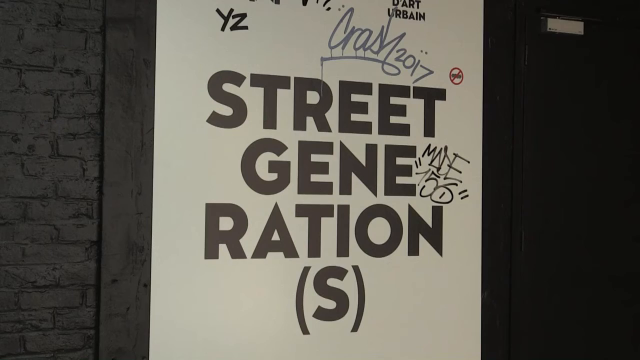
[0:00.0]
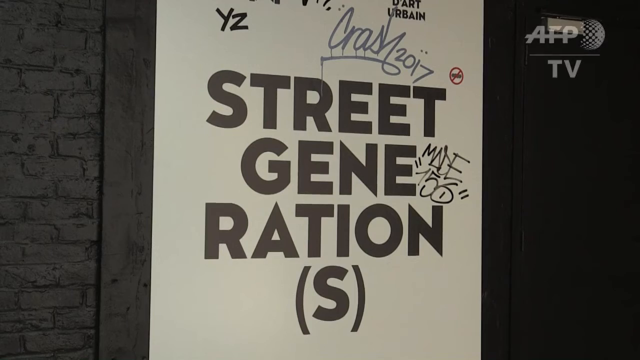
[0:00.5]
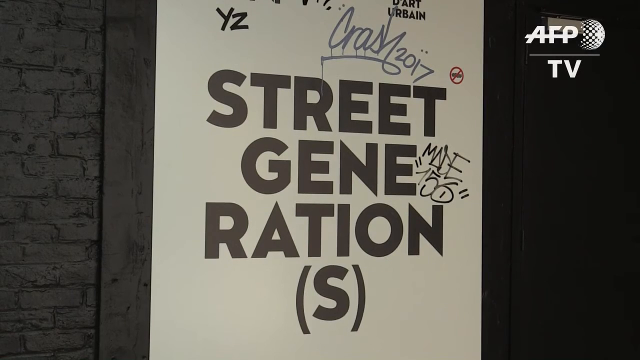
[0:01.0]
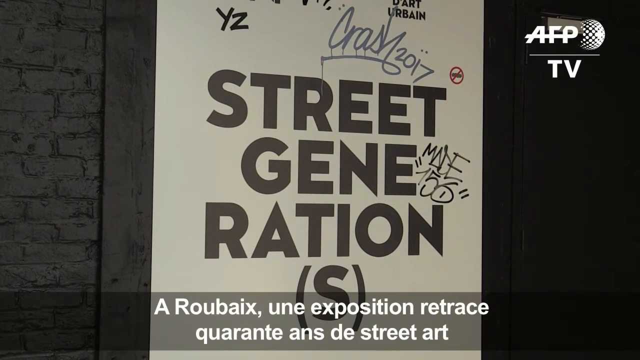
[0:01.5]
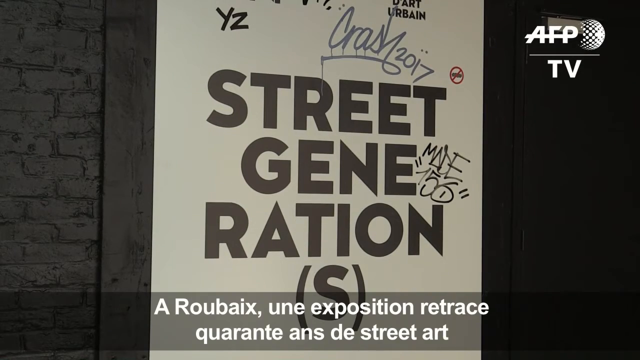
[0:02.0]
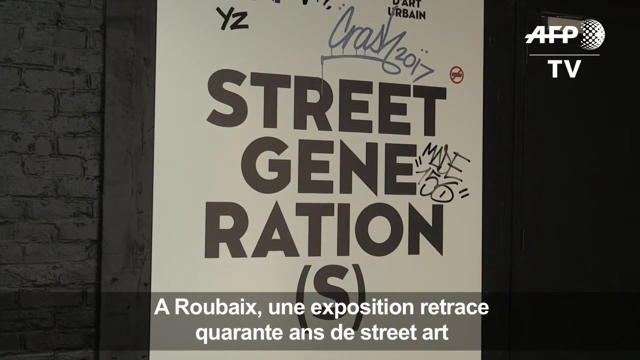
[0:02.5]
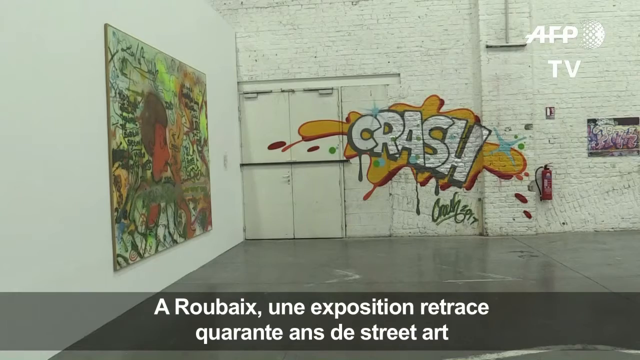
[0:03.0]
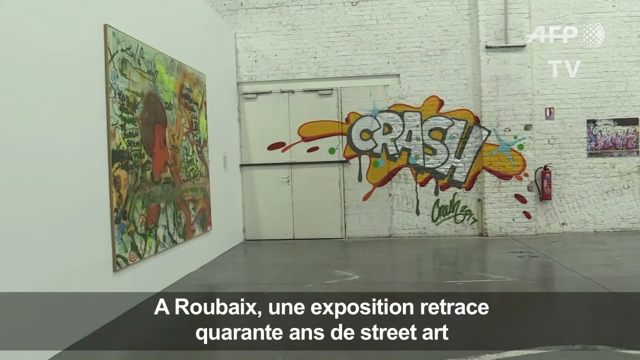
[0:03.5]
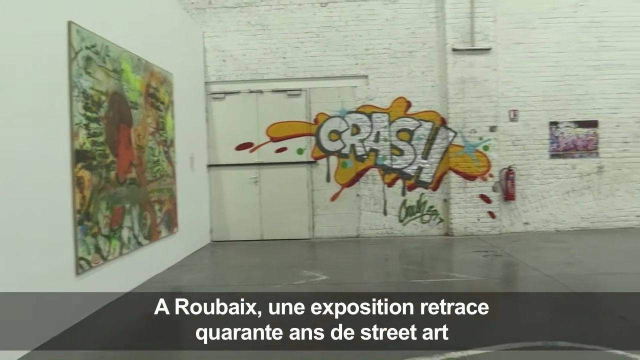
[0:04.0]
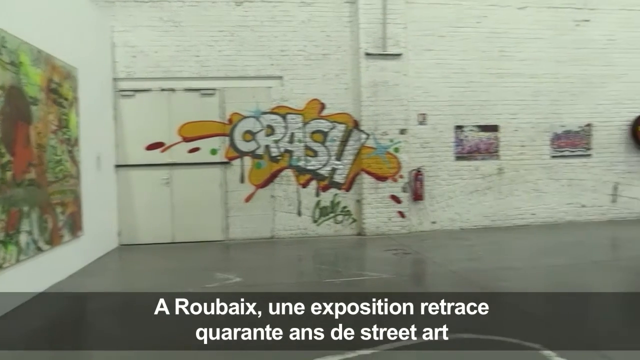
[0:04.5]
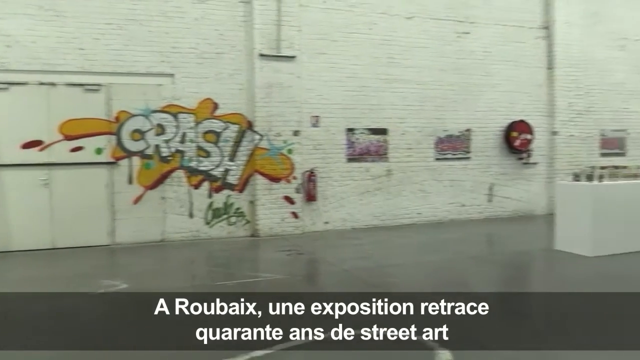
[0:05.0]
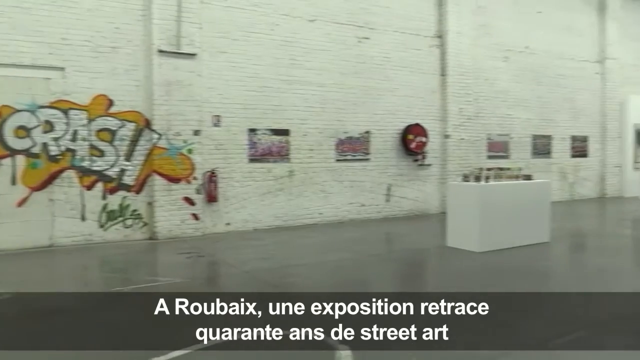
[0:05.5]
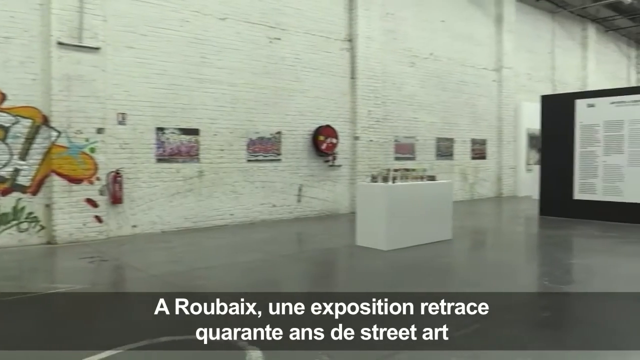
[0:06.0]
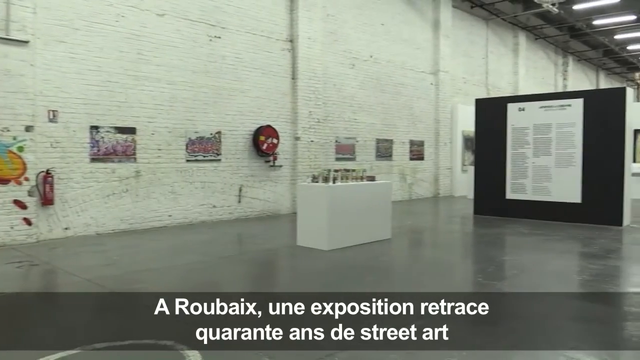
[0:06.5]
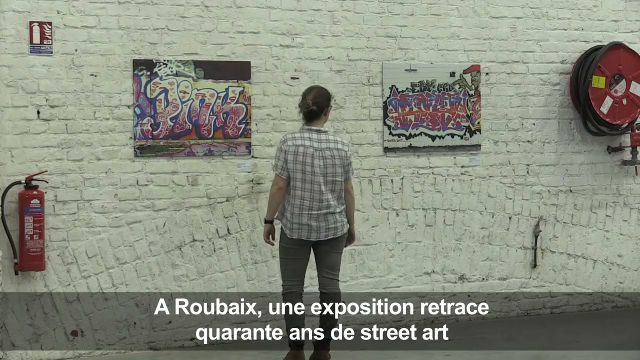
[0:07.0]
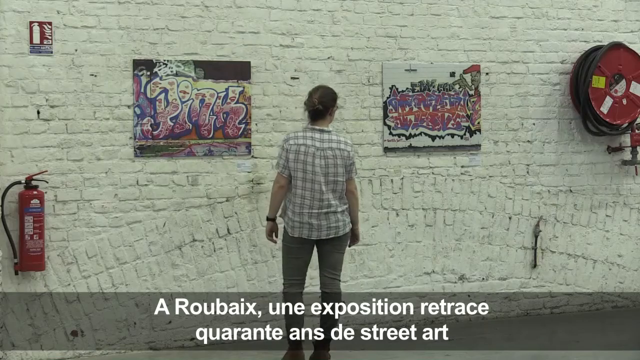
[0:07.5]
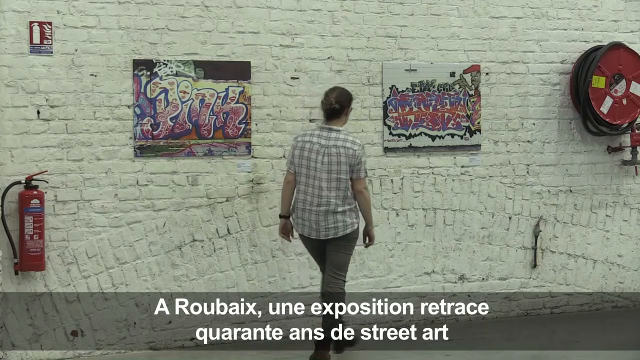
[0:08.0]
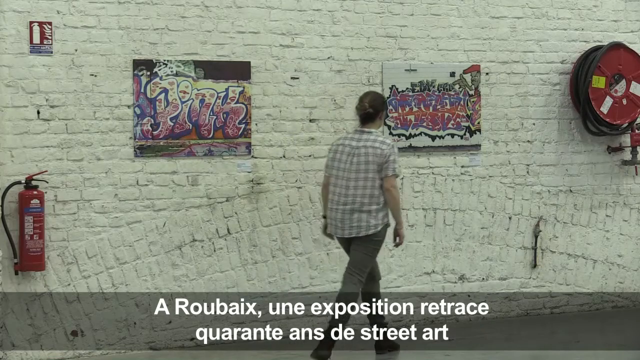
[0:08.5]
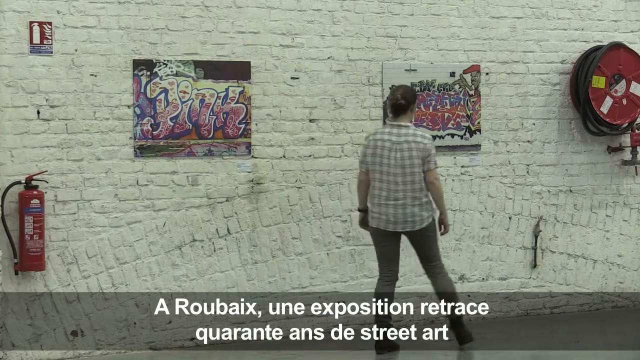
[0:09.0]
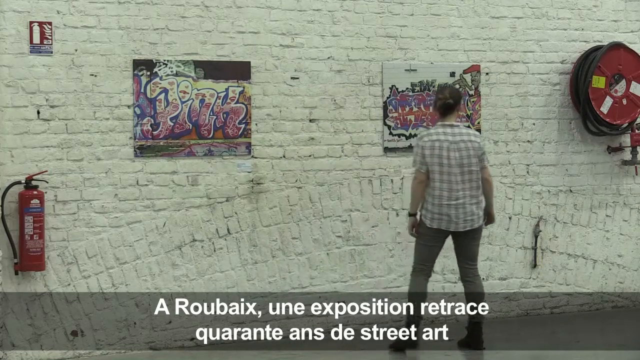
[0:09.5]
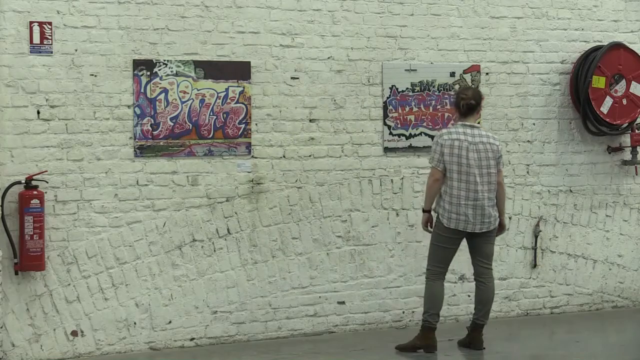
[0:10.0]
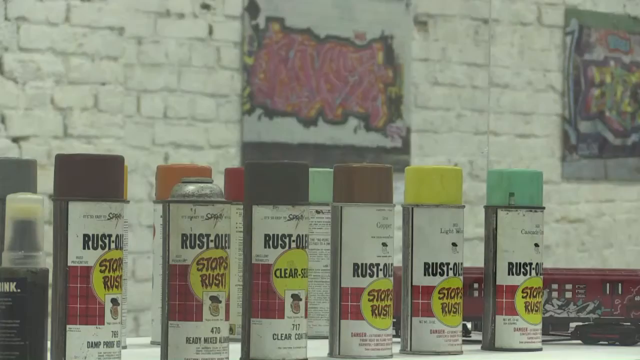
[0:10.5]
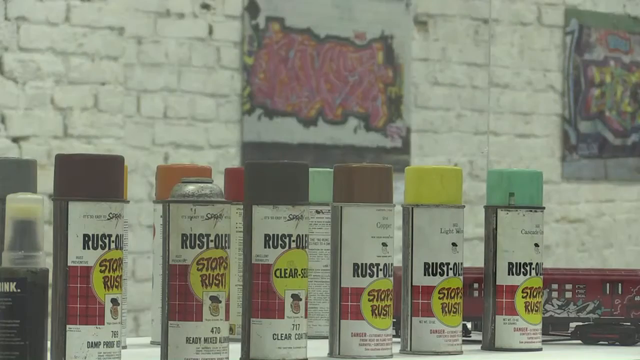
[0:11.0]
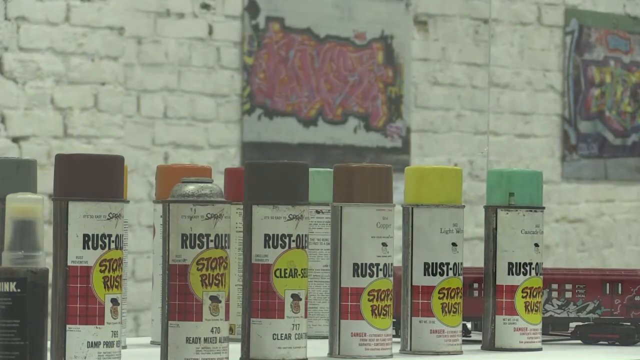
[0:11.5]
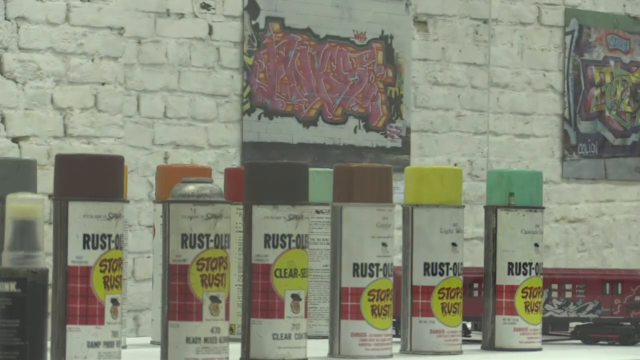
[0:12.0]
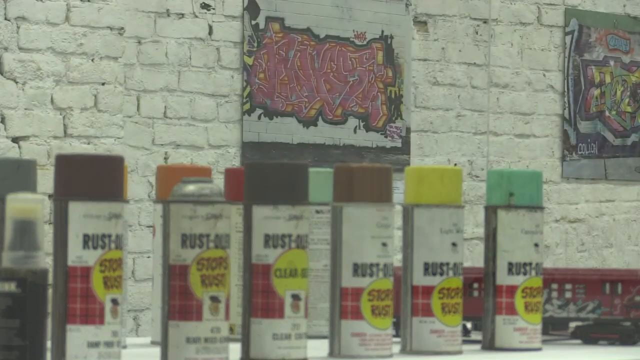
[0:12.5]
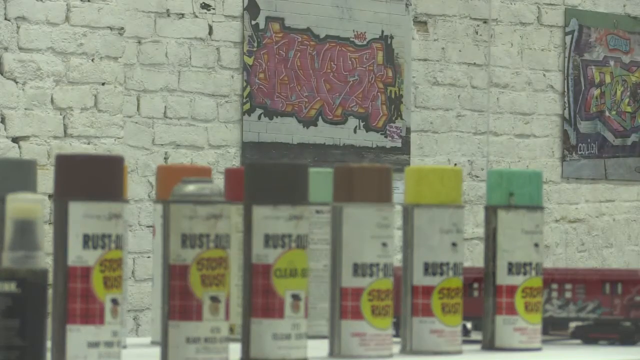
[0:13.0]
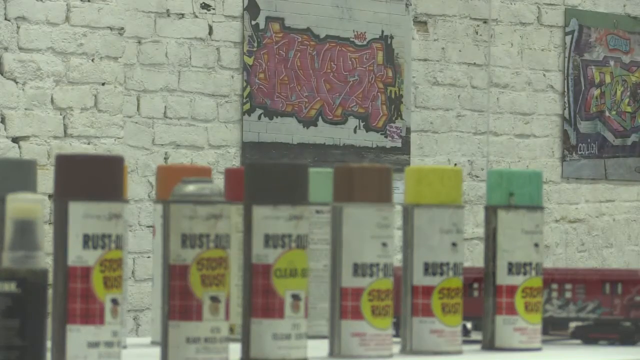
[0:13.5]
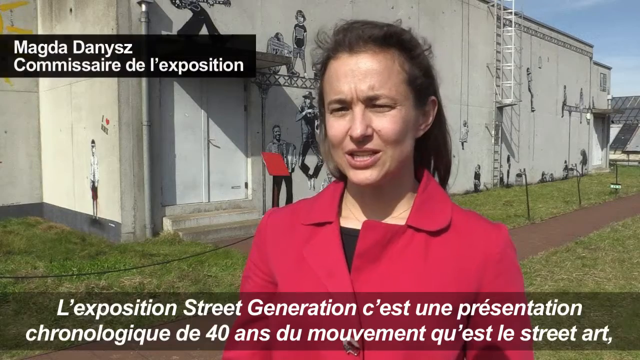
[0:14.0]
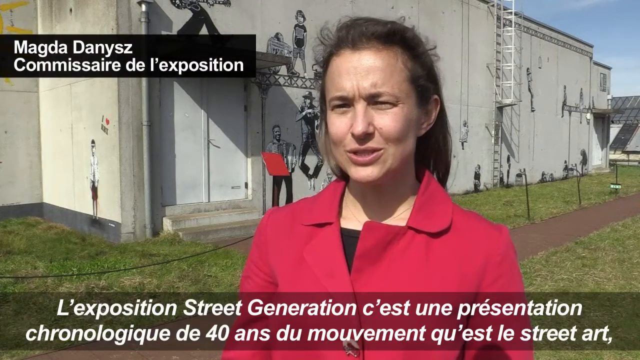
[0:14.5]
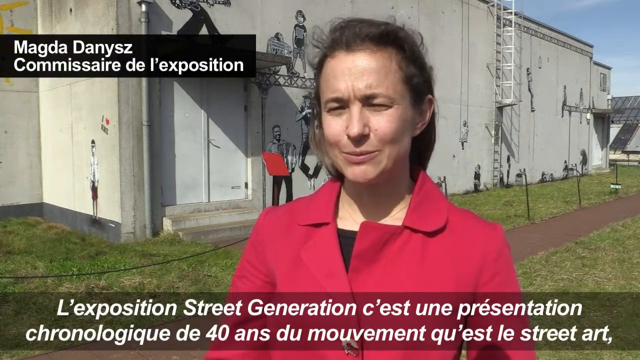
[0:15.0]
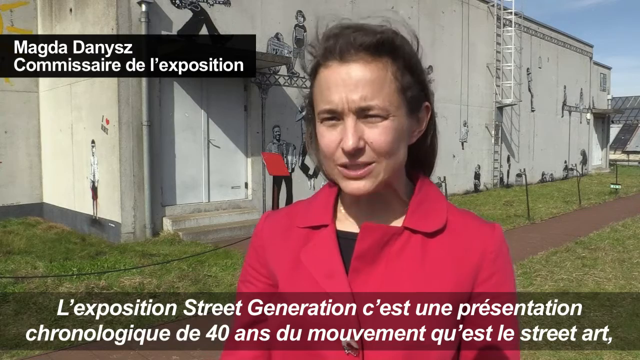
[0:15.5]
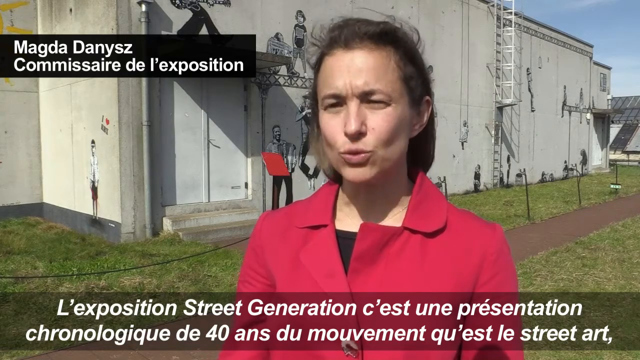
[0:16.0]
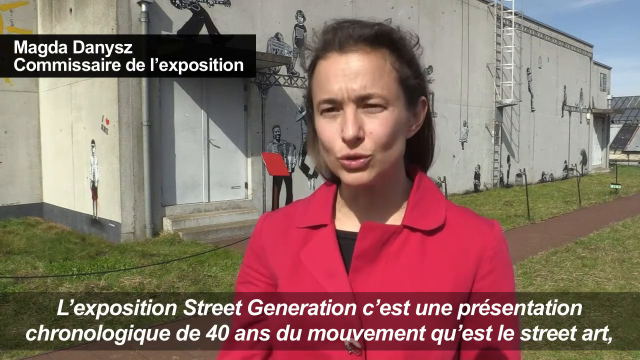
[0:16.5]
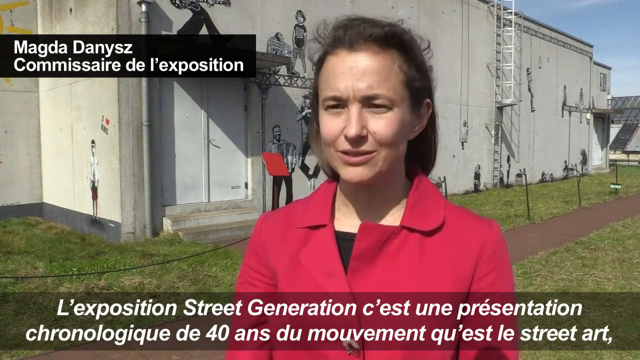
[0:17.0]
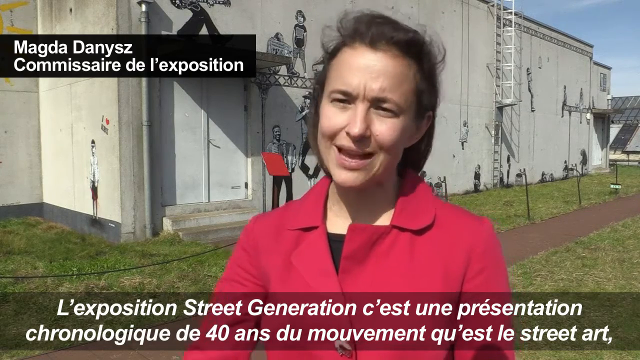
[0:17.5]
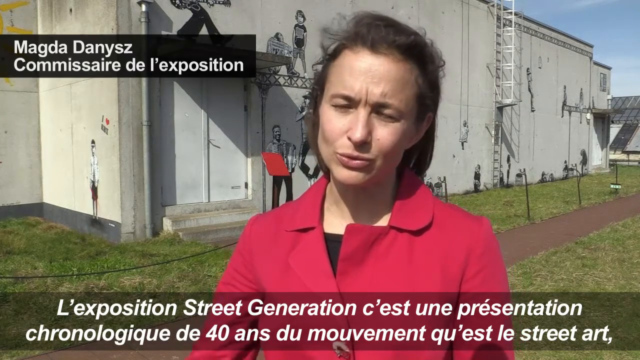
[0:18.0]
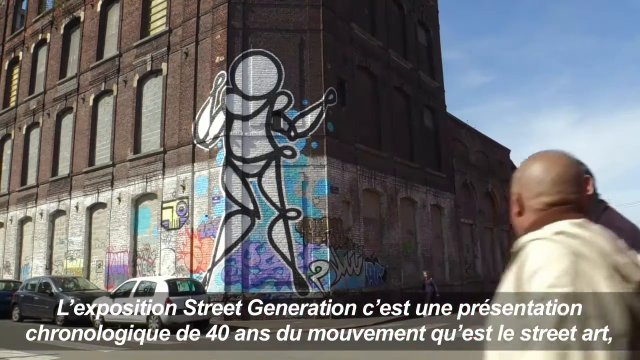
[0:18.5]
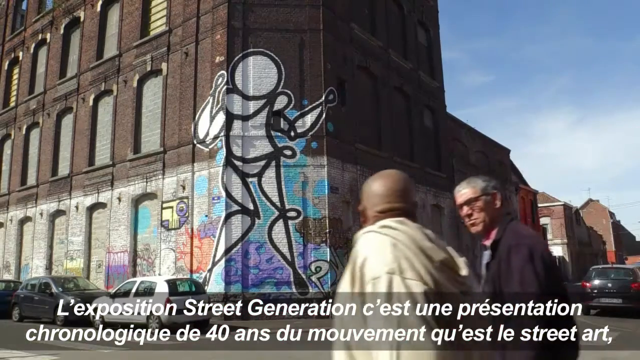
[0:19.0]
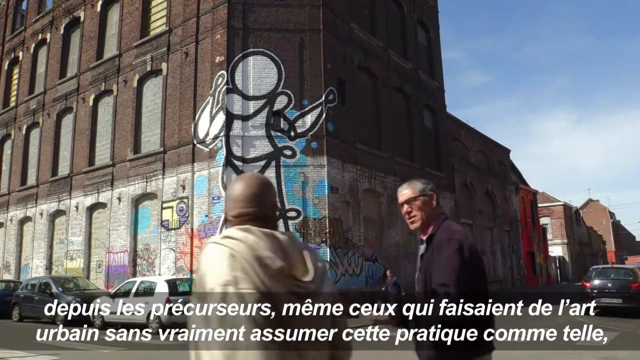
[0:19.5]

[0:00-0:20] A white poster is on a black wall. It reads "Street Generation" with an "S" in brackets at the bottom, and there is some graffiti on the poster as well. On the right-hand side is the logo of a TV channel, AFP TV. The camera then shows a full view of a huge room with white walls and graffiti everywhere. The word "crash" appears in white with orange all around it, and colorful graffiti covers the walls. A woman in a checkered shirt is standing and looking at the graffiti in front of her. There are two designs, and there is a fire extinguisher on her left-hand side and on her right-hand side. A few colors of spray paint cans are shown next: yellow, green, brown, black, orange and red. A woman named Magda then appears on screen, probably outside the same building. The scene then changes to an old building with graffiti on it and two men walking past it.